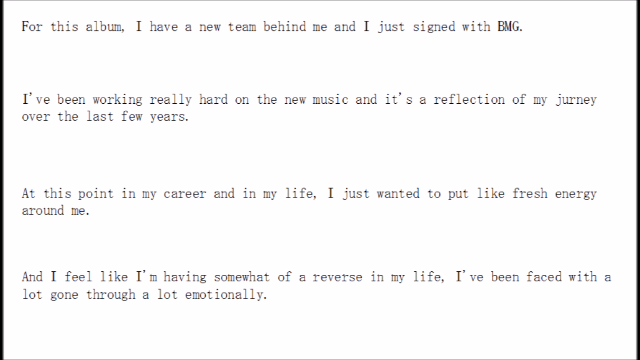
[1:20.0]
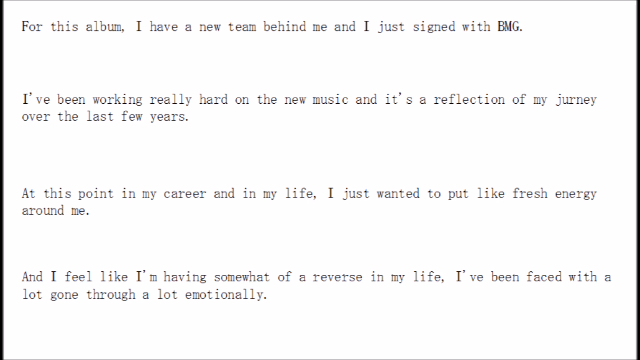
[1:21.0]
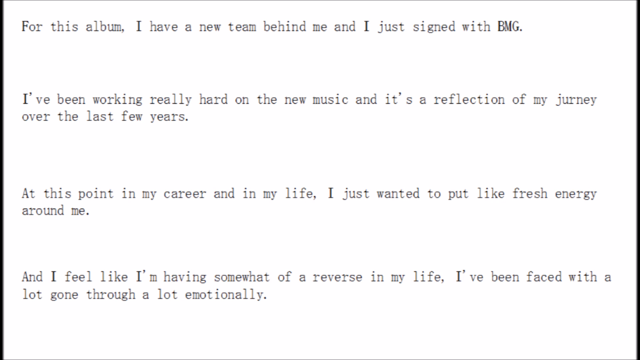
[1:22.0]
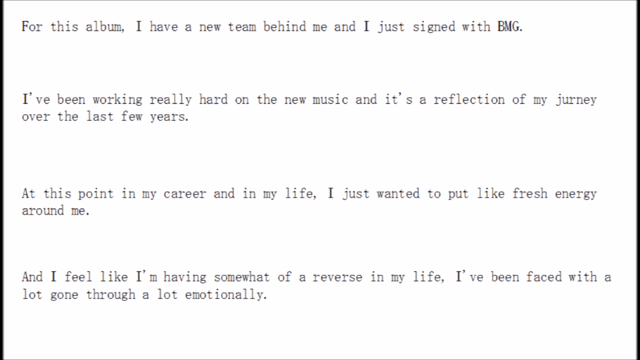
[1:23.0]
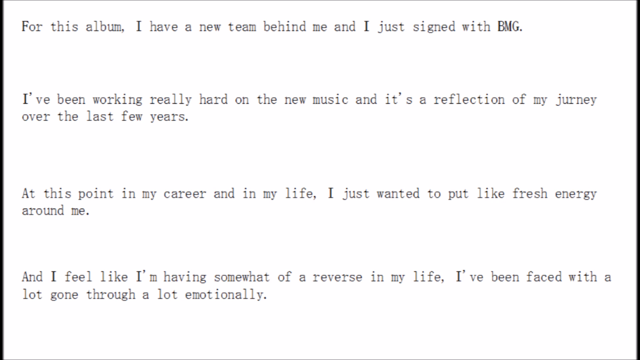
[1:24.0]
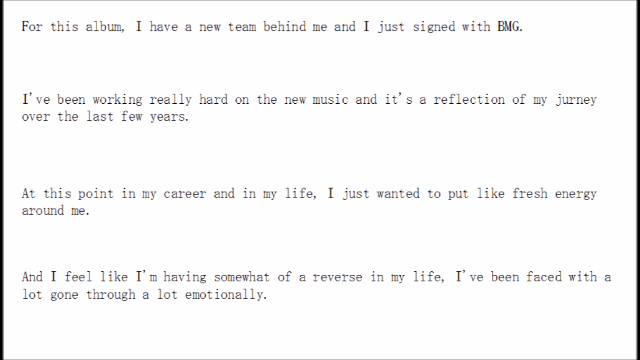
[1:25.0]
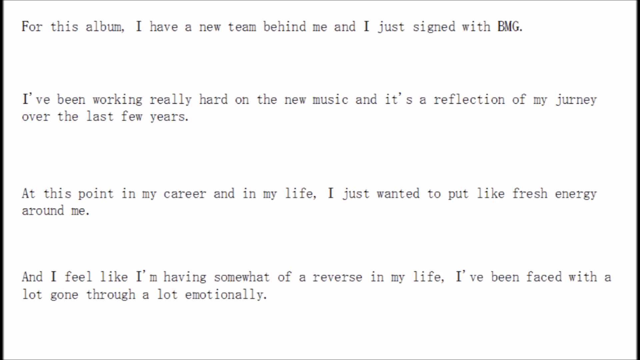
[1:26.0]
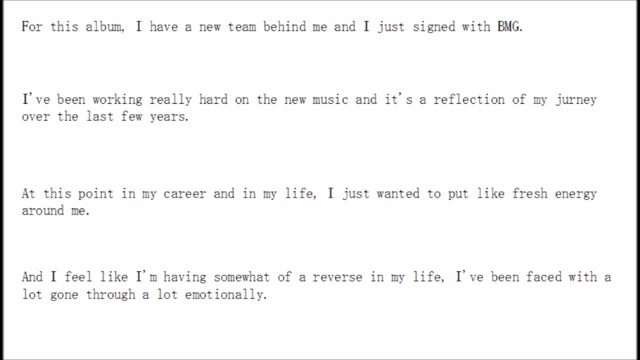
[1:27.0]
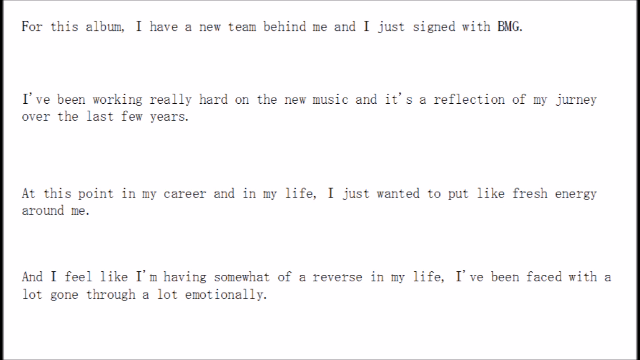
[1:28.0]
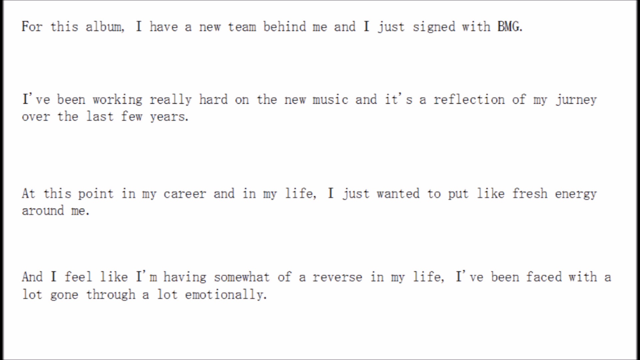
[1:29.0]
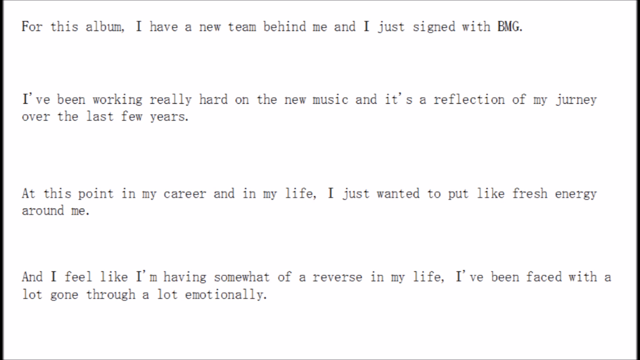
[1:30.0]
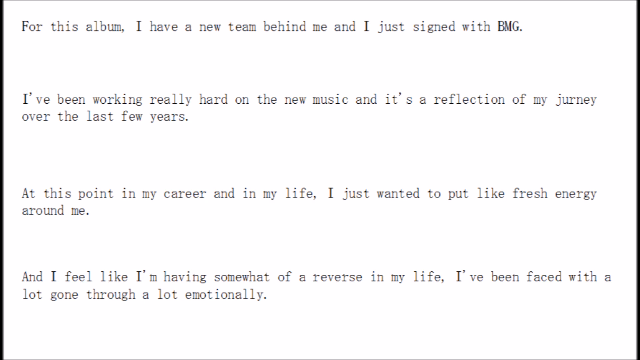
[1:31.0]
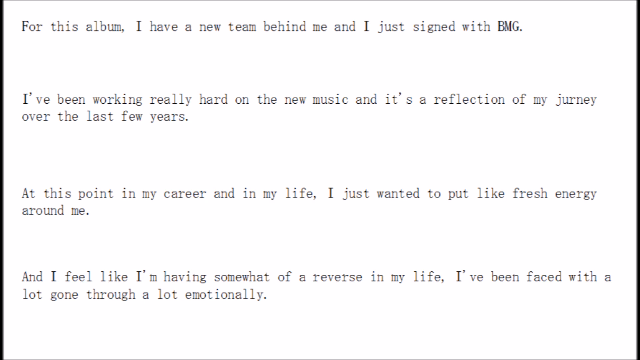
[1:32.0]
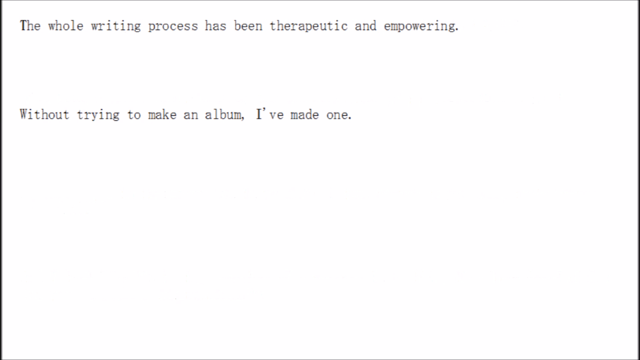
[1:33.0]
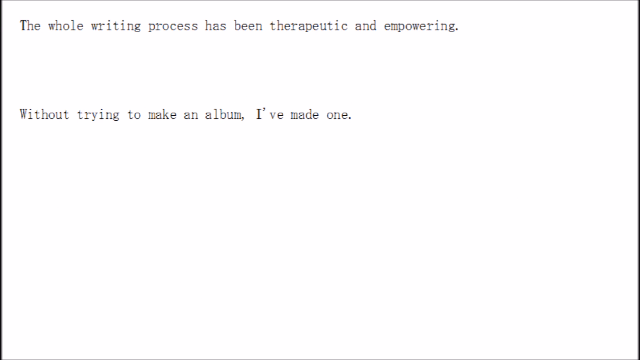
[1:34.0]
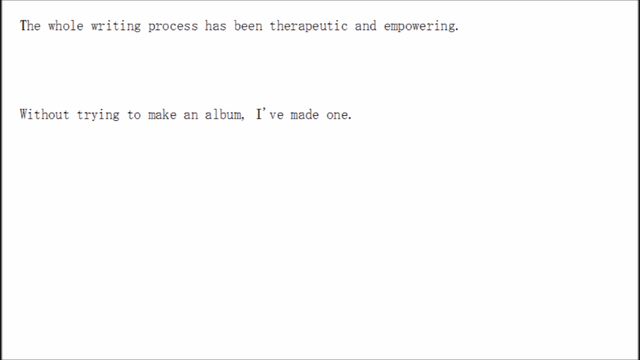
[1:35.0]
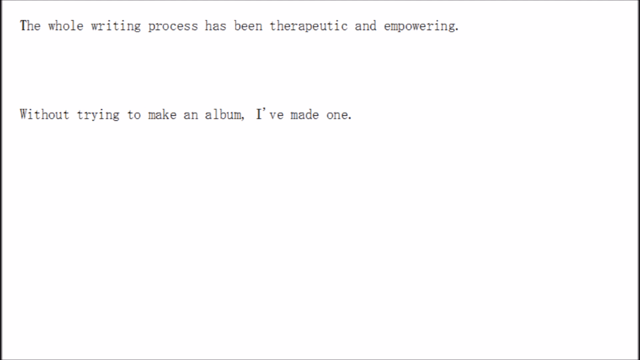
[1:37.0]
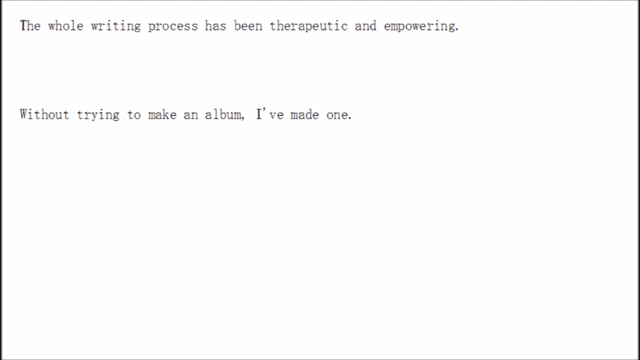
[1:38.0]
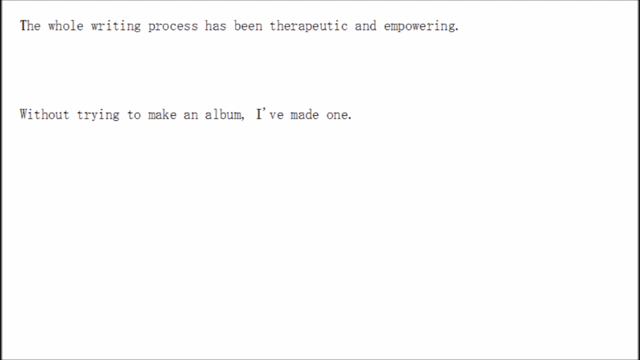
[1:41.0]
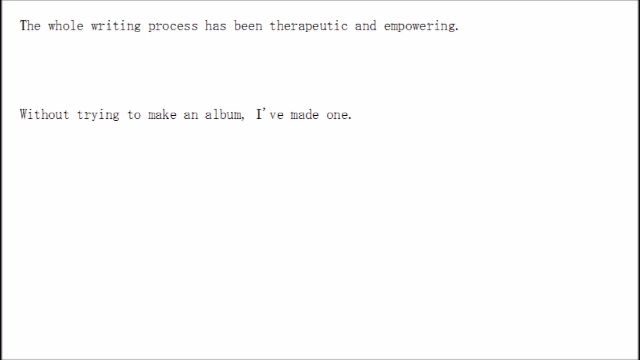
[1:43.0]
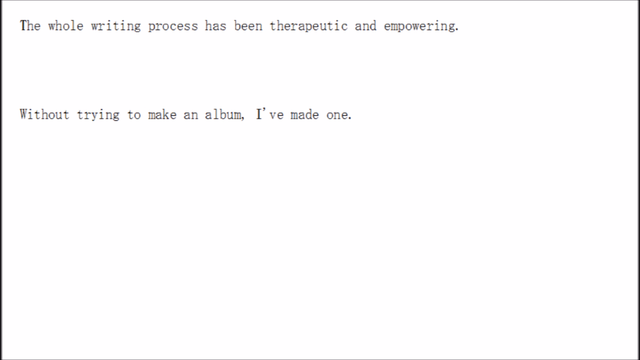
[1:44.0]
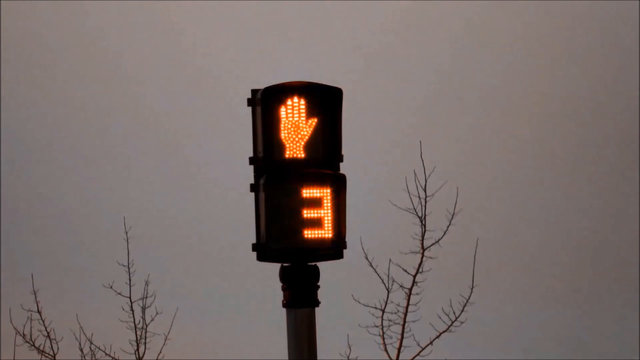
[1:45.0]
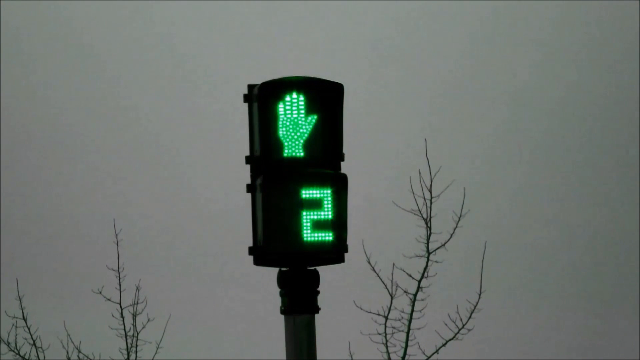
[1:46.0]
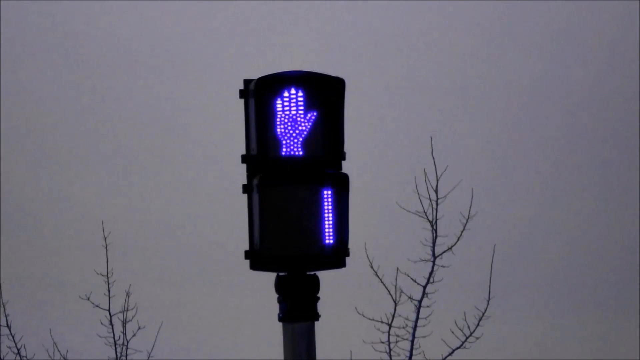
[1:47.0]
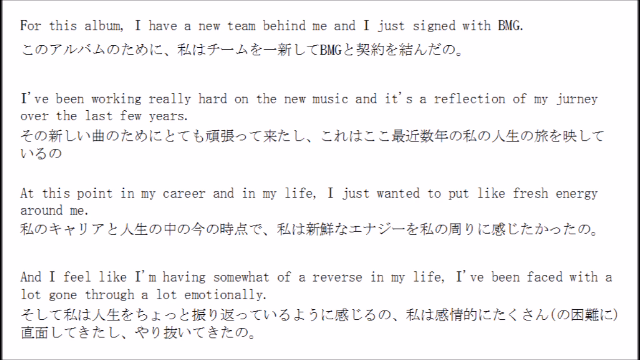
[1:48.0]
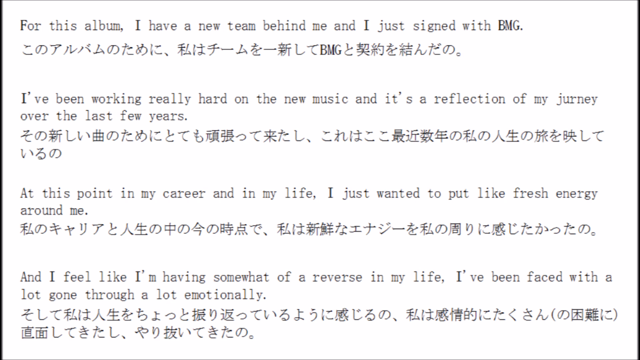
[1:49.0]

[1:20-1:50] Gray text on a white background shows what is perhaps an interview response: "for this album. I have a new team behind me and I just signed with BMG. I've been working really hard on the new music and it's a reflection of my journey over the last few years. At this point in my career and in my life, I just wanted to put like fresh energy around me and I feel like I'm having somewhat of a reverse in my life. I've been faced with a lot, gone through a lot emotionally." The text continues: "the whole writing process. It's been therapeutic and empowering without trying to make an album." The video then goes back to the pedestrian countdown sign, which counts from three down to two and one, with a hand shown. The countdown sign is black, with something sort of eerie around it, and it sits on a pole that appears to be black. Beyond it are bare trees with no leaves, and the sky is gray, dreary and overcast. Then the same interview text appears, apparently accompanied by written language that is not English.